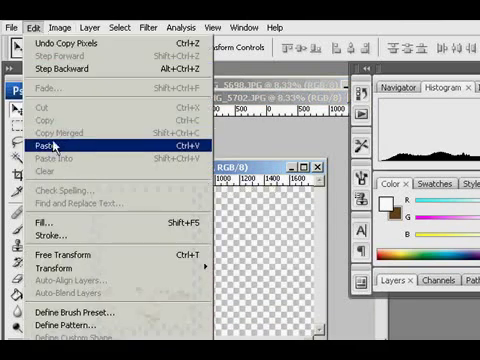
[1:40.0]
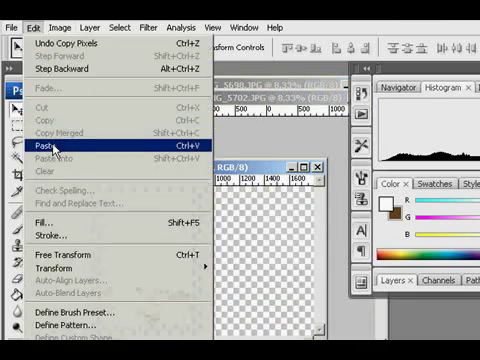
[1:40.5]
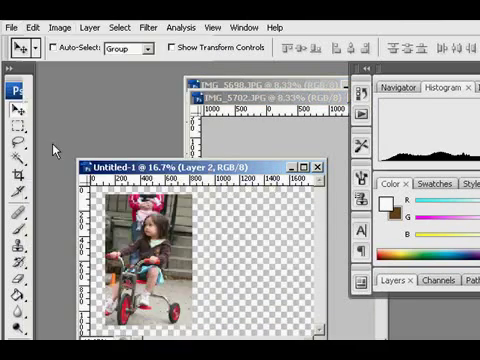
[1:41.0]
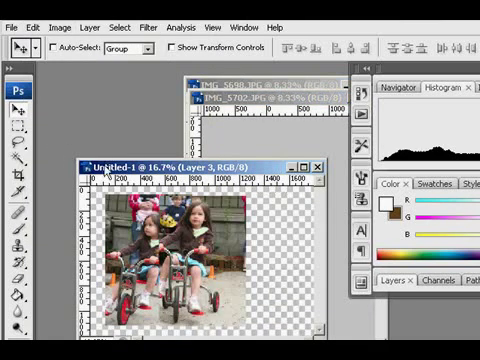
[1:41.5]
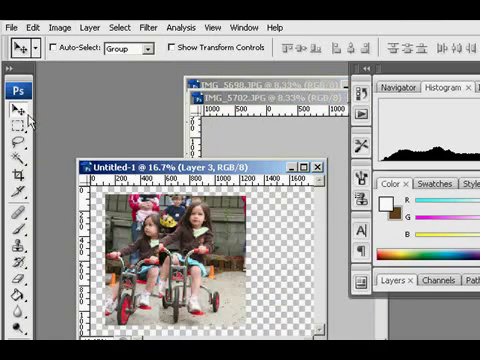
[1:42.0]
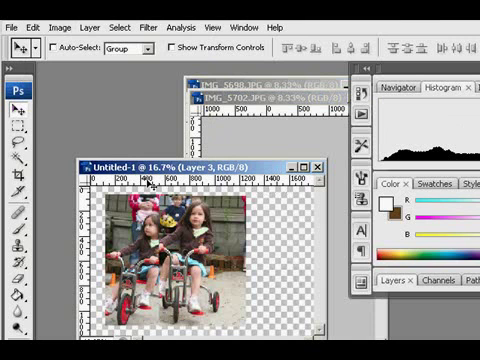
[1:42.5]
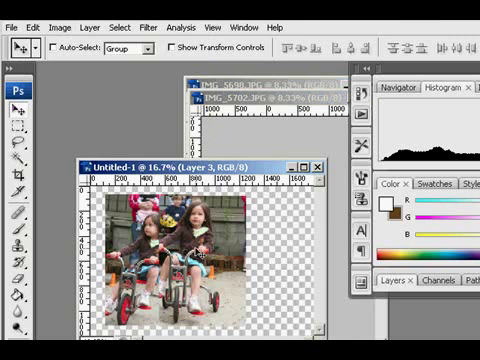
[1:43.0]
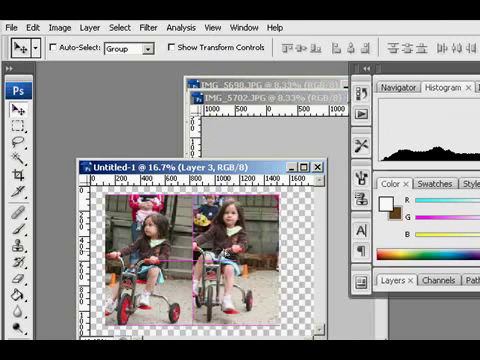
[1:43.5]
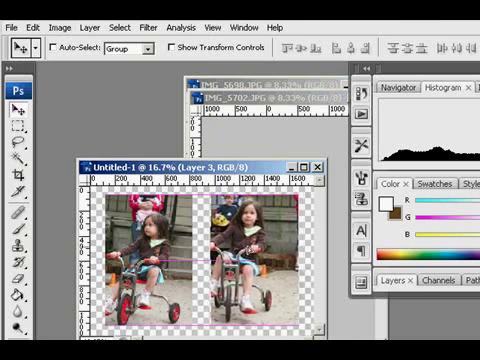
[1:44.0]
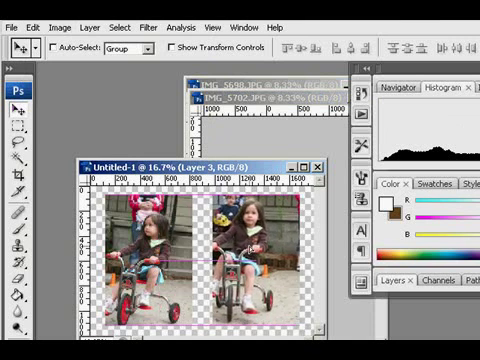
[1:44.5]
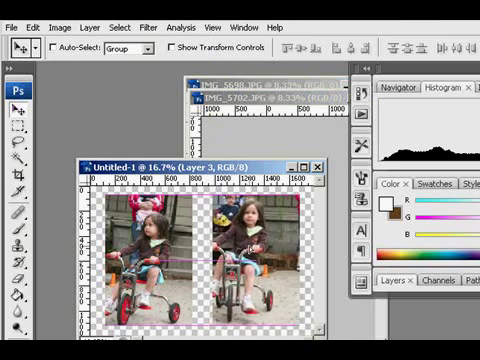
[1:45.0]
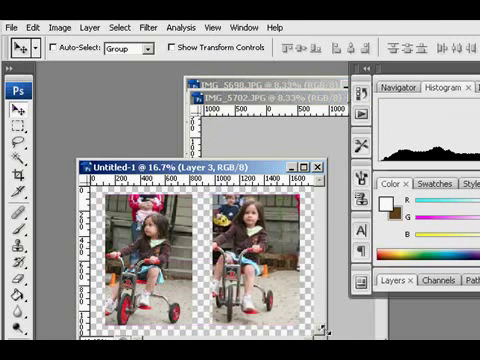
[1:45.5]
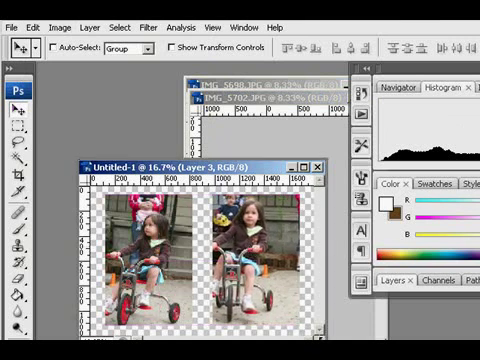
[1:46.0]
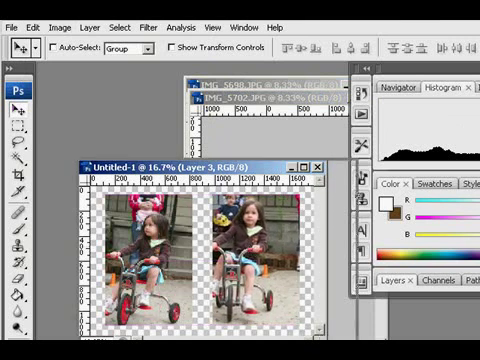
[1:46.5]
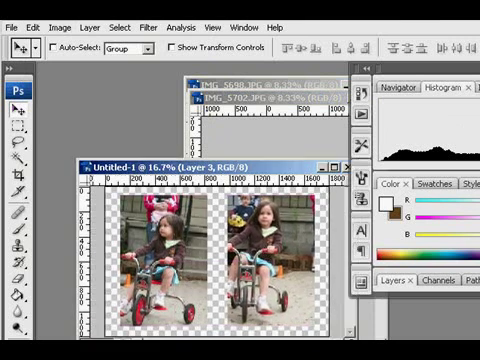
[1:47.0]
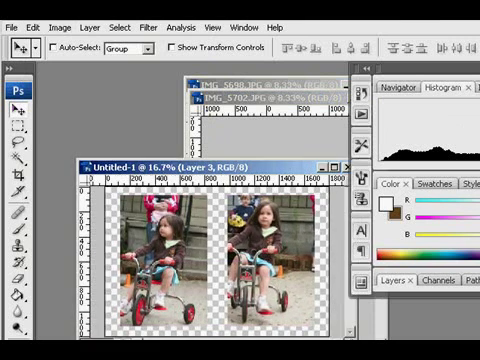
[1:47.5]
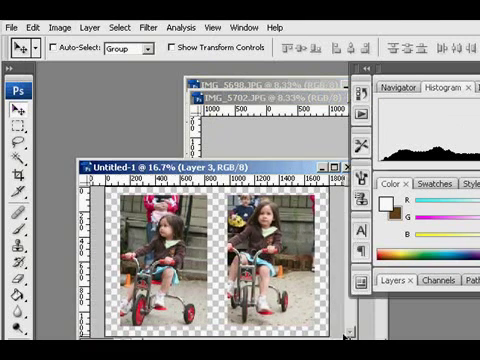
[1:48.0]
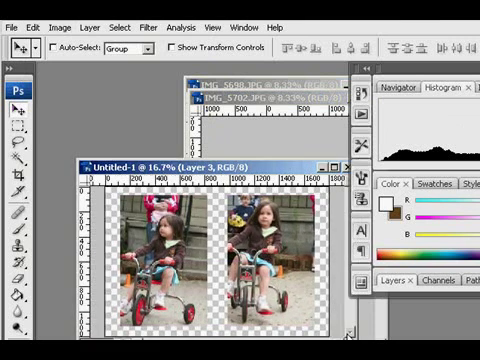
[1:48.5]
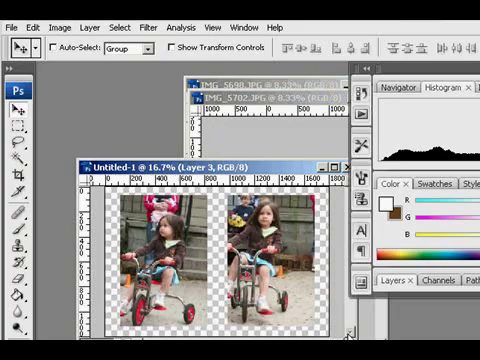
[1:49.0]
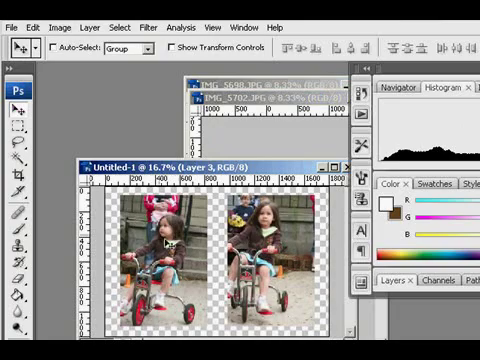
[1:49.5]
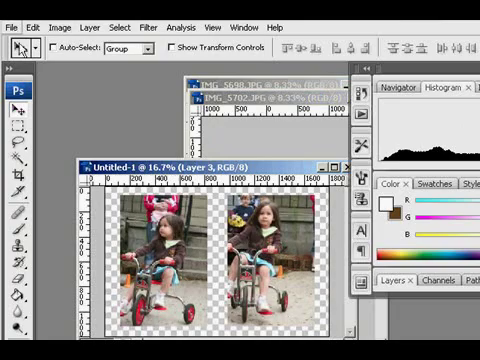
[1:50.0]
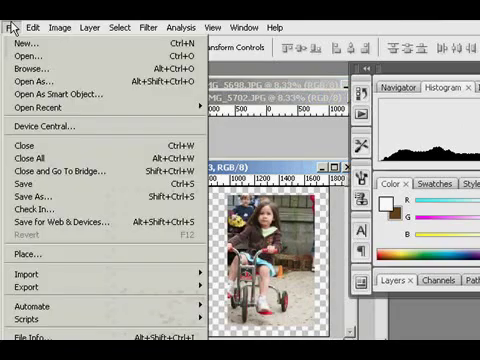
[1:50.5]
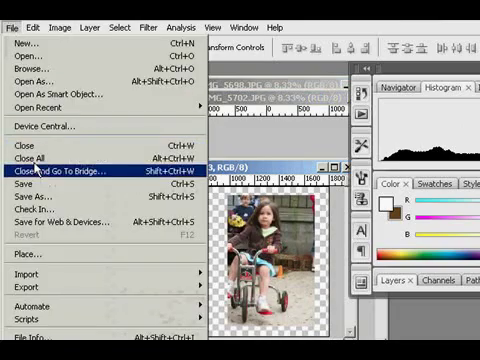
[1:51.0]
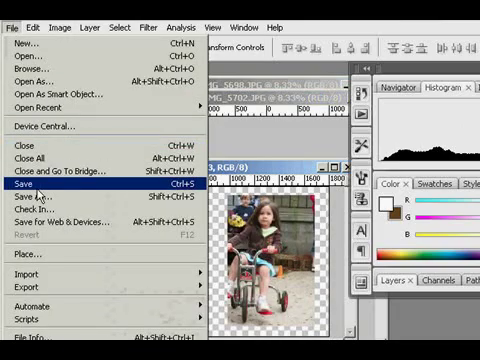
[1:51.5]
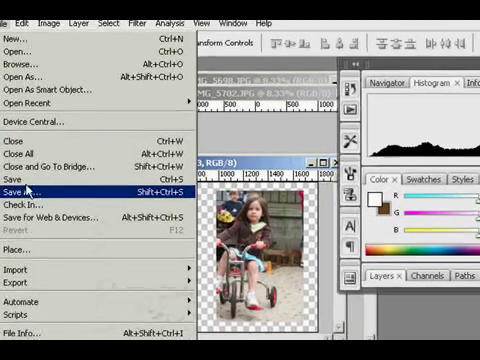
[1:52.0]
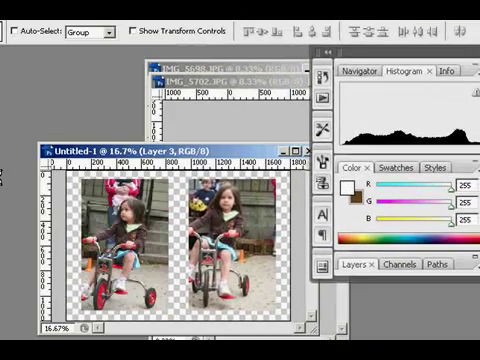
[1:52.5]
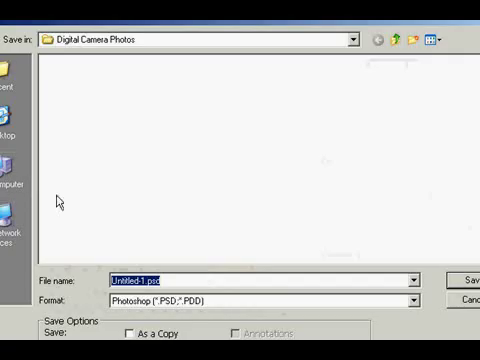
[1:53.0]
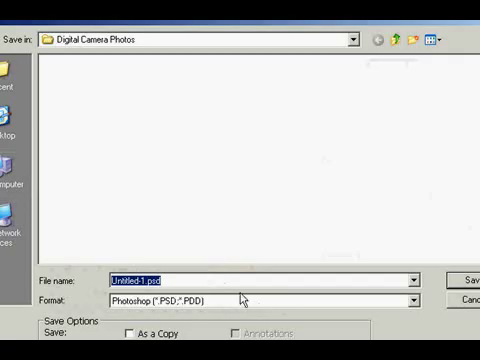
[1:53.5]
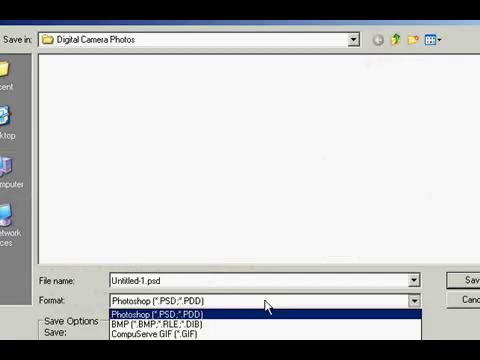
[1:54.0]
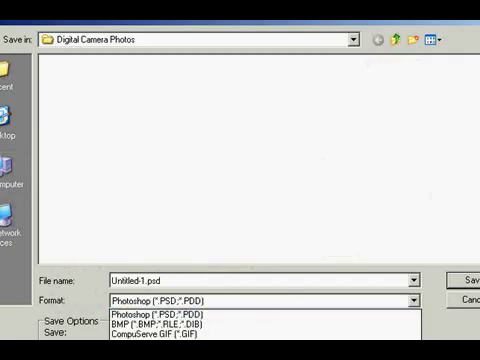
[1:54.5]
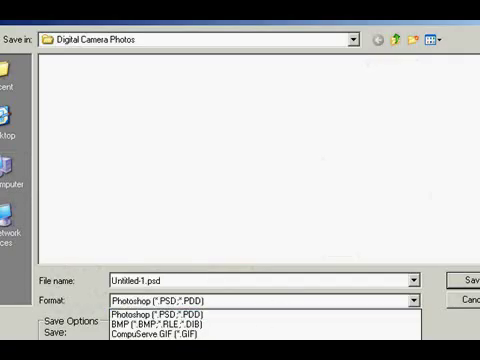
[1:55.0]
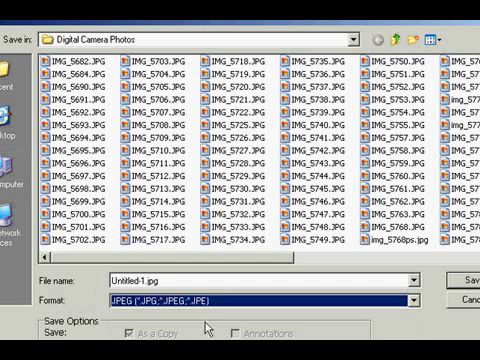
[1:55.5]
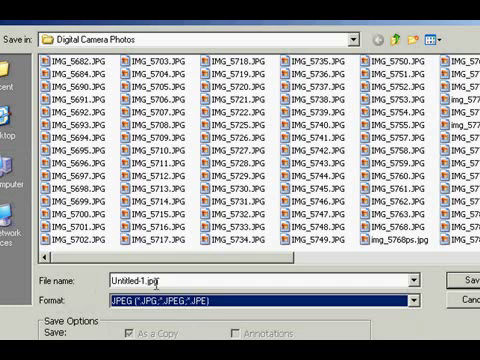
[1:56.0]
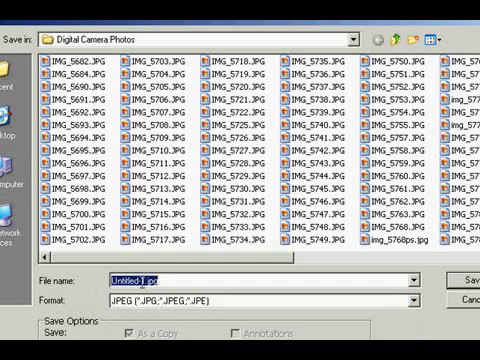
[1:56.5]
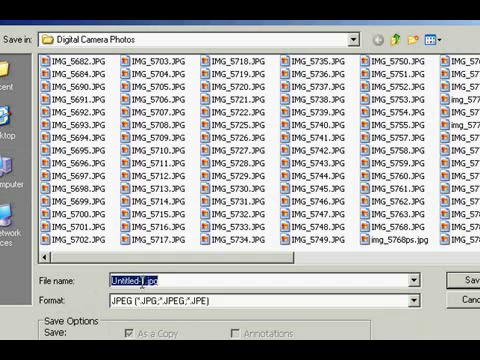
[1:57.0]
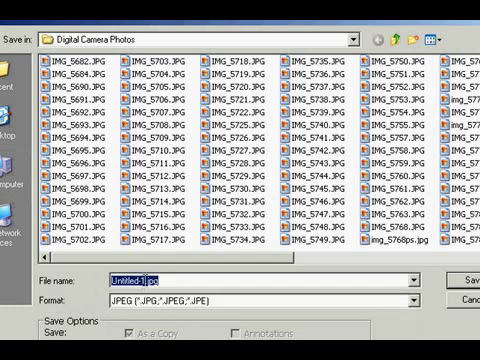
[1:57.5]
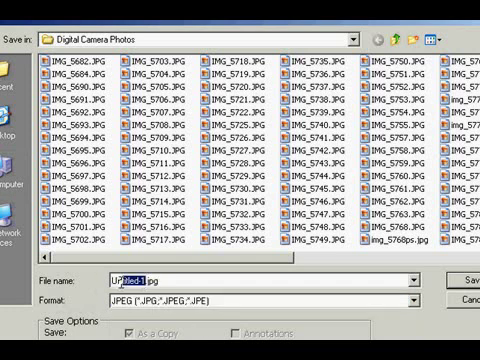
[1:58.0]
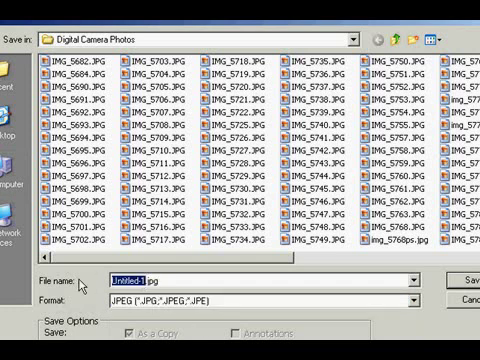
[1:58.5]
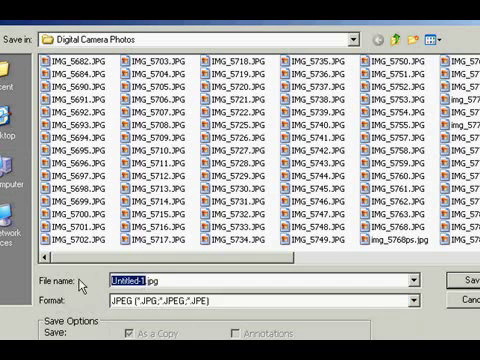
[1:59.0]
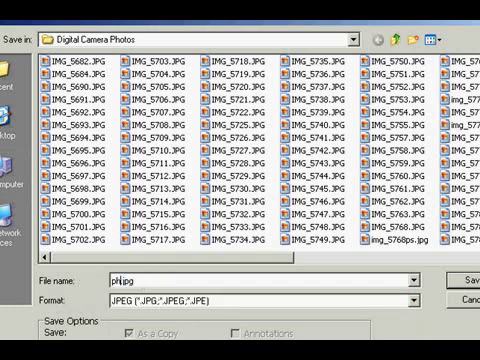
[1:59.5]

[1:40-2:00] The two images are now on the same page. The user positions them so they are entirely level, lining up the tops and bottoms of the images and levelling where the handlebars are in the middle of the page. In one of the photos the girl is photographed a lot closer than in the other. The images have not been altered by changing colours or removing background items.